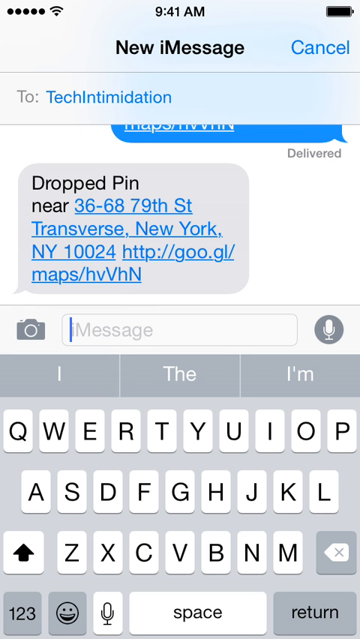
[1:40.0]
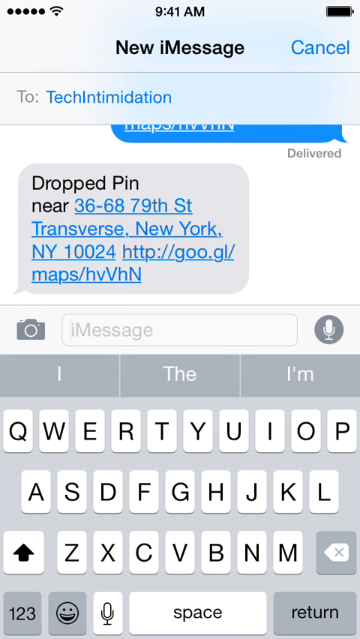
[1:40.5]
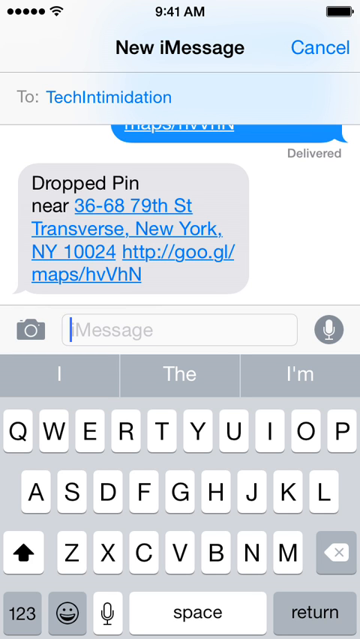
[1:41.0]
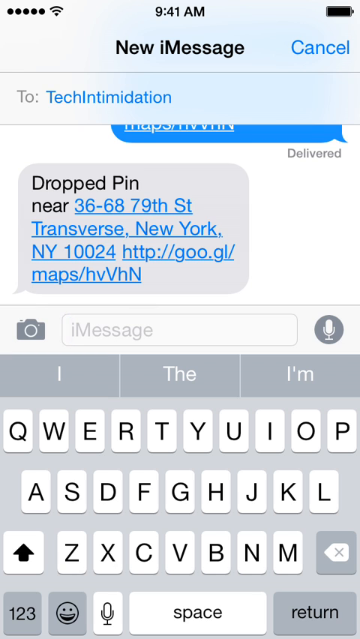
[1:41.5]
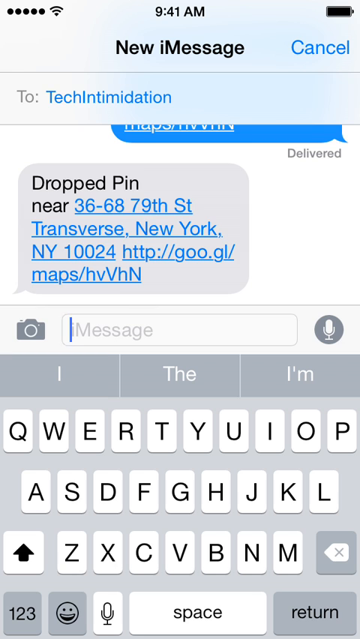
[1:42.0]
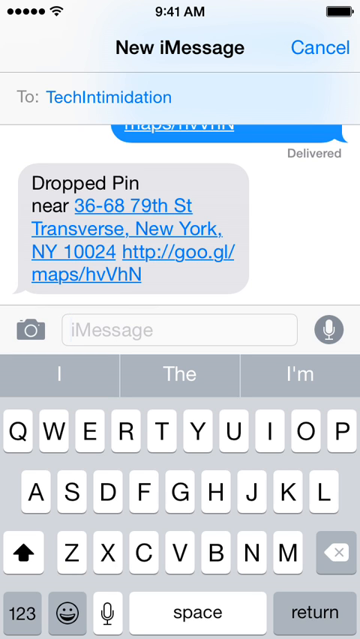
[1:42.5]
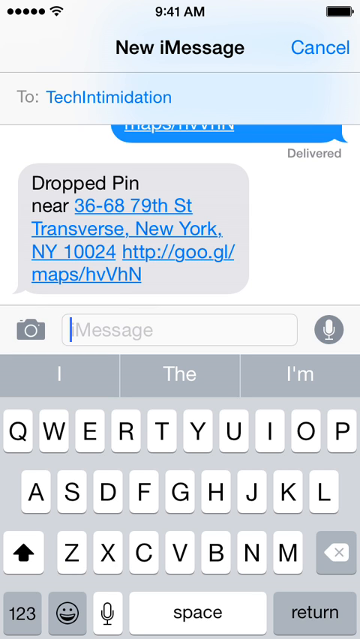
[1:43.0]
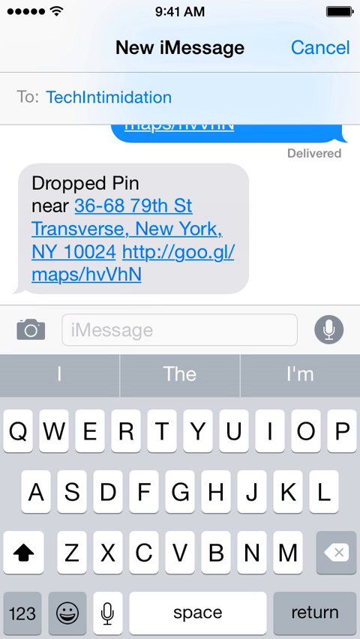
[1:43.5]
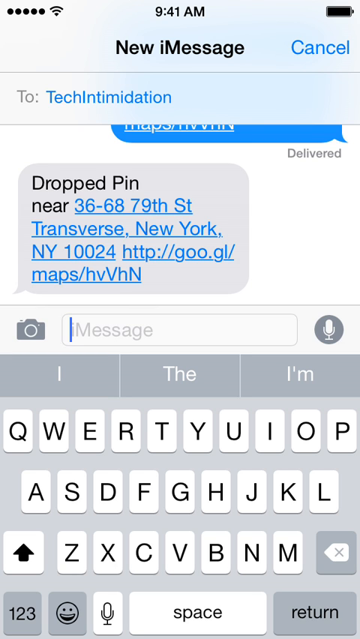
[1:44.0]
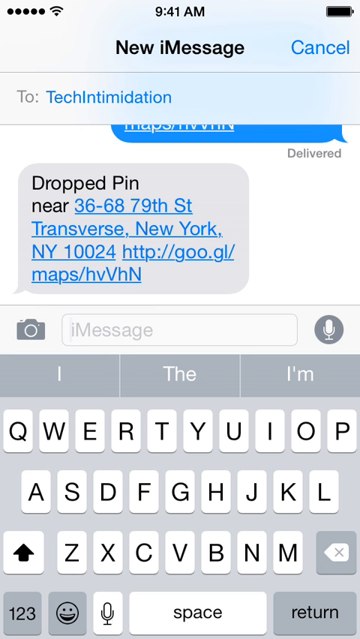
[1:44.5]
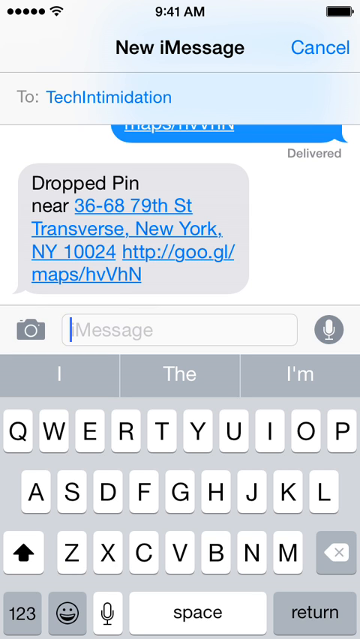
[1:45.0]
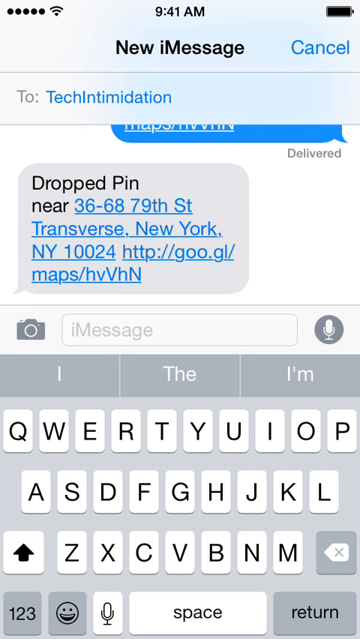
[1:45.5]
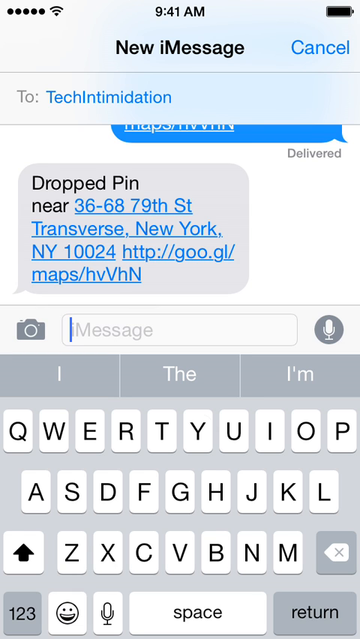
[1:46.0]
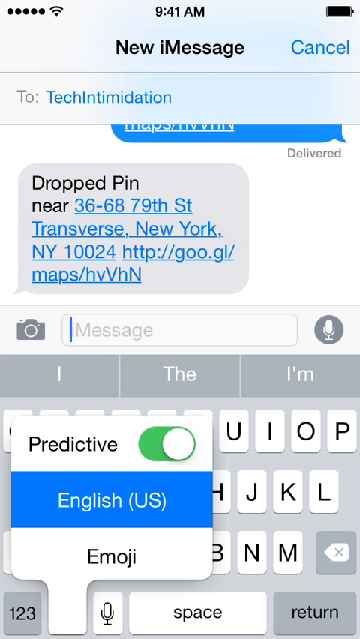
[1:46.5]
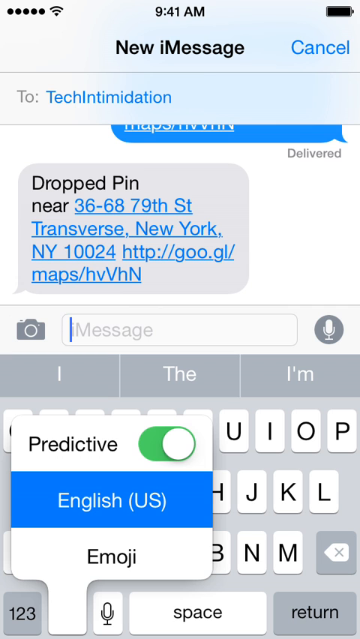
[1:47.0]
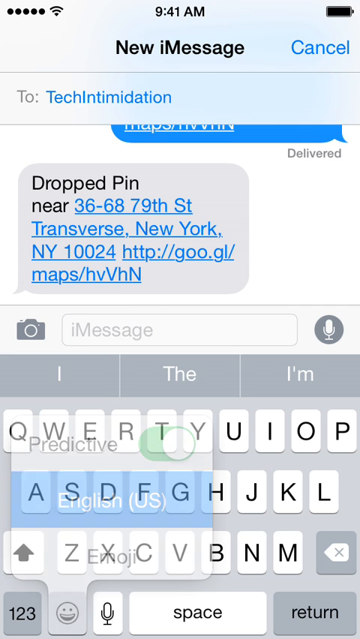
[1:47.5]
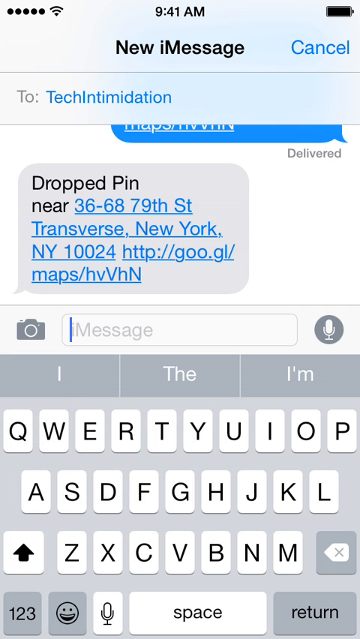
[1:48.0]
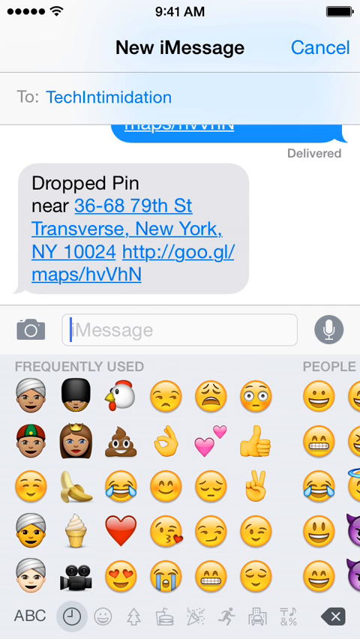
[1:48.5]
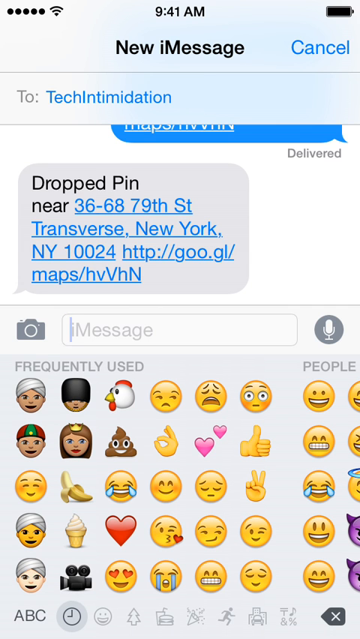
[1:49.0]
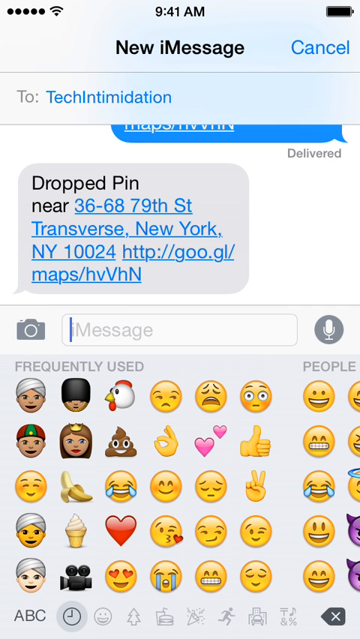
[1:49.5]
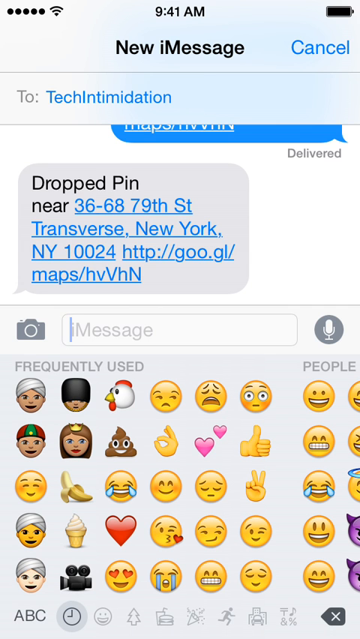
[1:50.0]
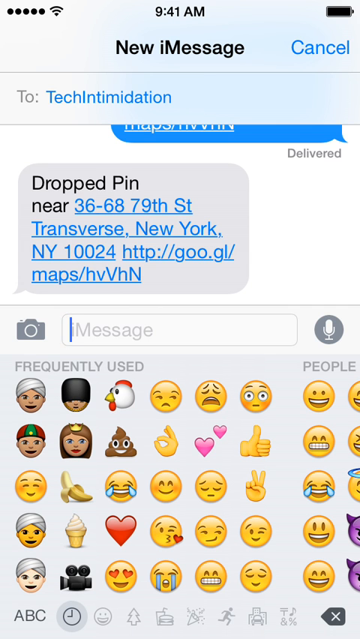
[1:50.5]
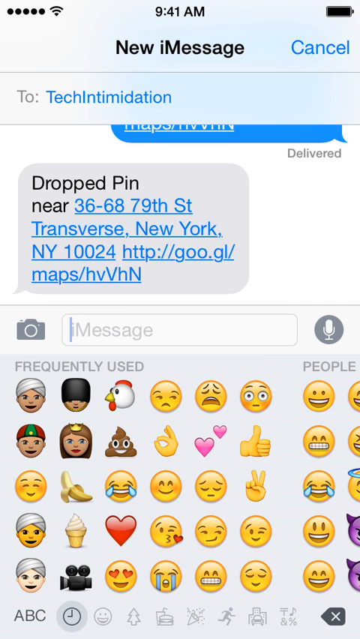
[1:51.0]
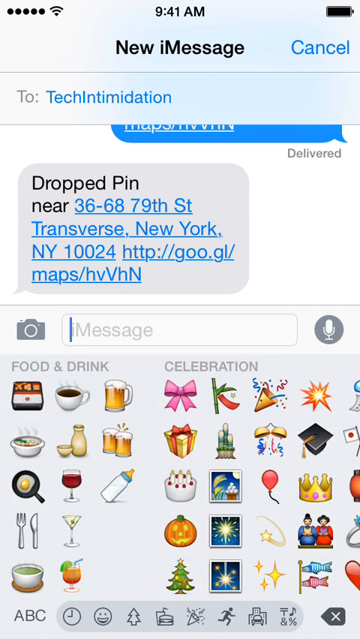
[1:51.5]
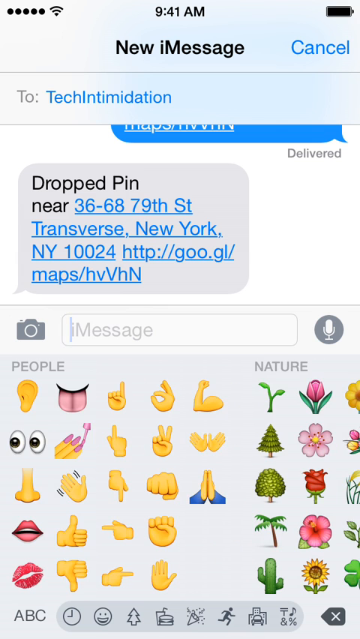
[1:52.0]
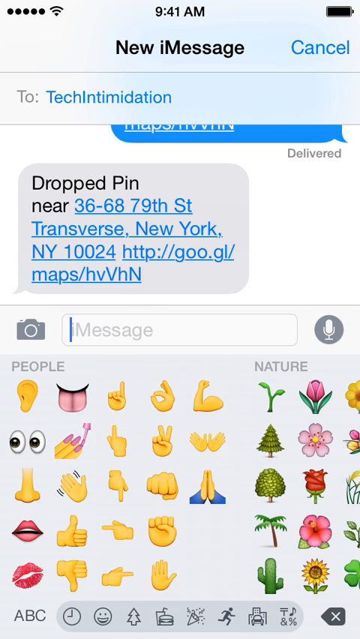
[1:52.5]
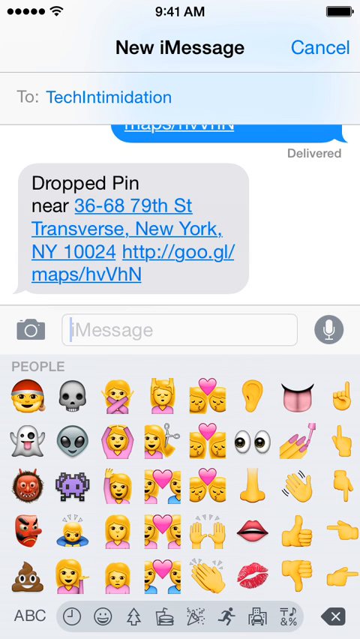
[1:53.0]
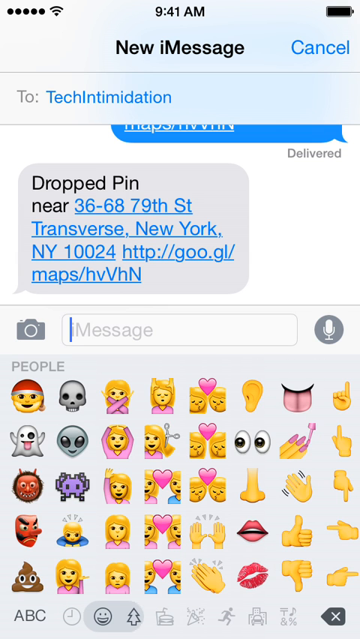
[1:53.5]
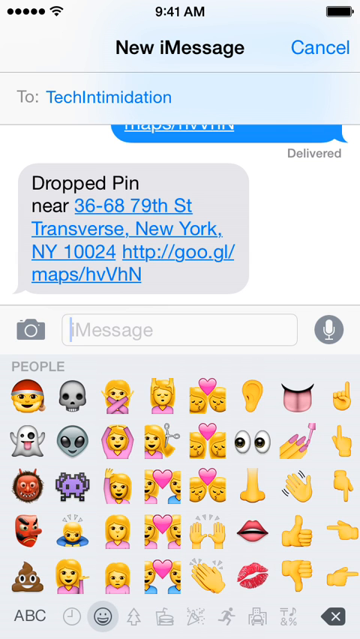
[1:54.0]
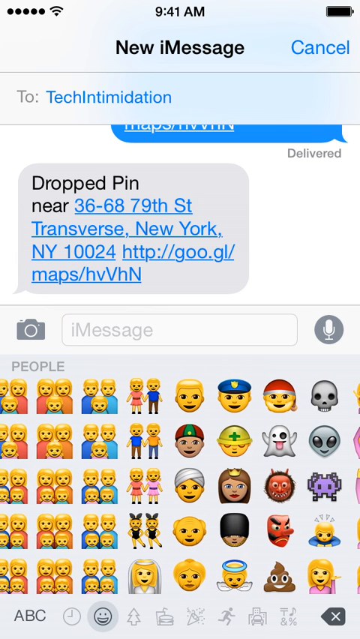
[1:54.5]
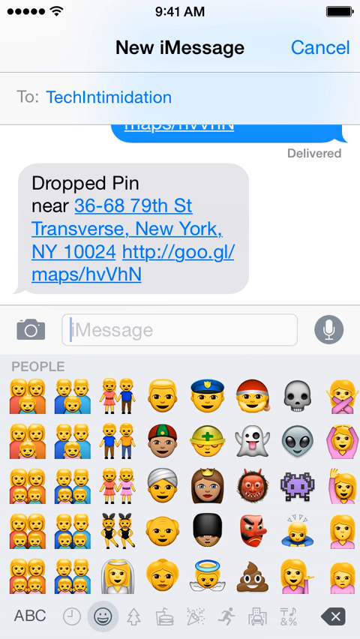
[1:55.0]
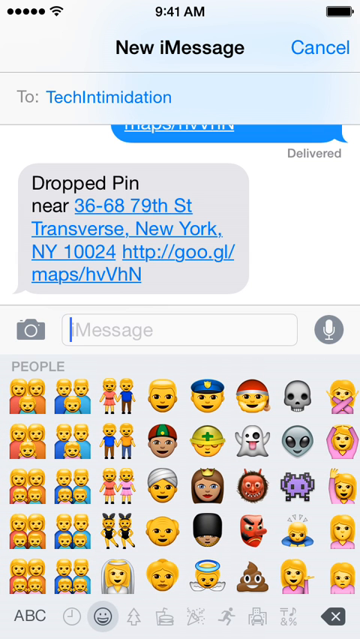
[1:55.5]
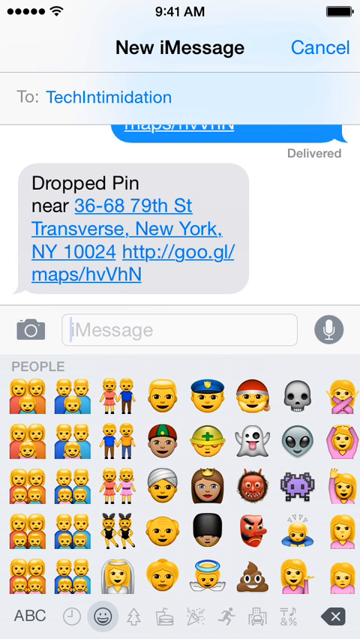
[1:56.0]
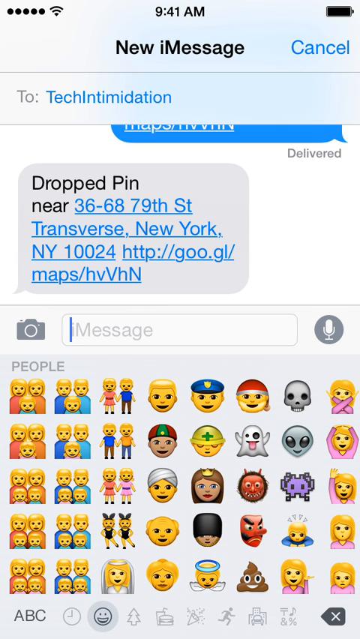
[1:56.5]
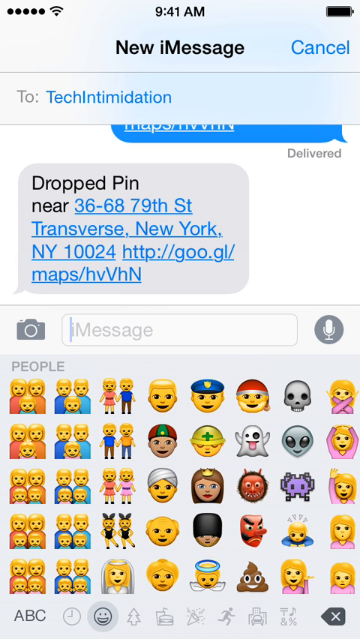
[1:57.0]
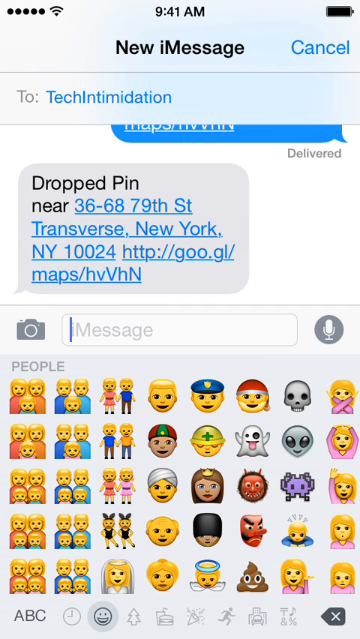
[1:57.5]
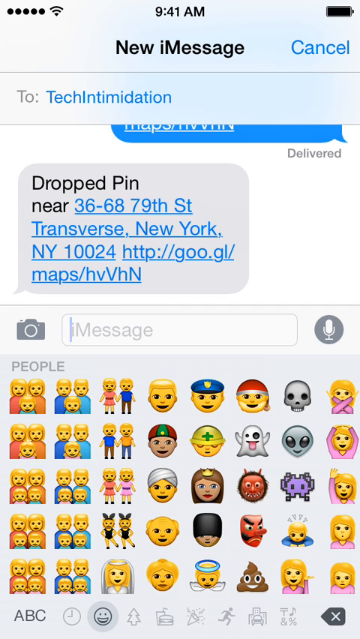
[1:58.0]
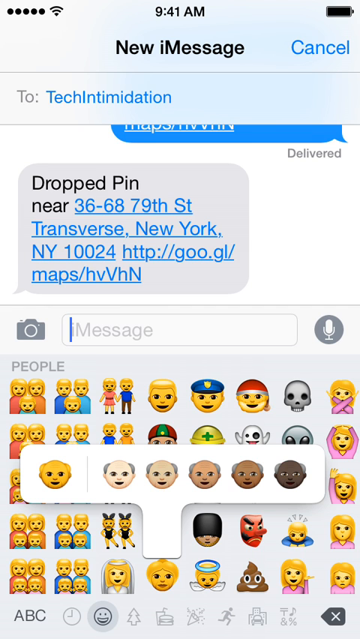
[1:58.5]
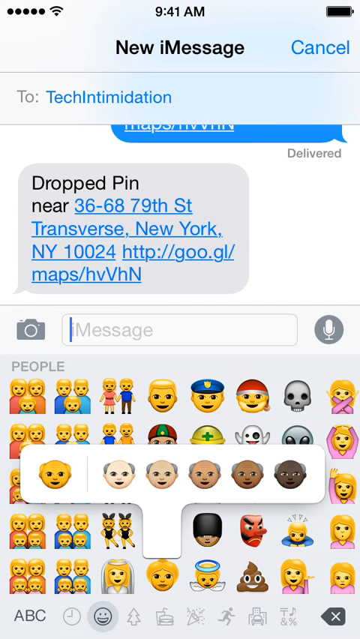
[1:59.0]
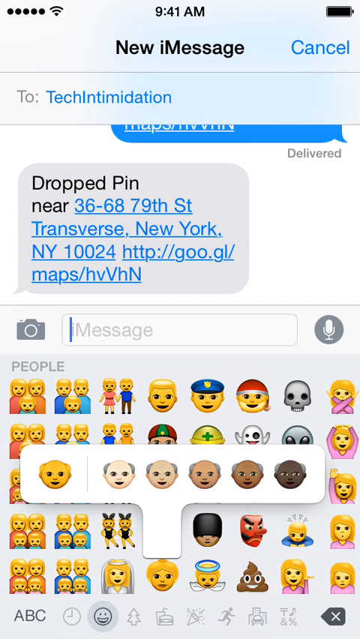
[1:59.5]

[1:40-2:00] Back in messages, nothing happens for a bit. The user then holds the smiley face symbol near the keyboard and switches to the emoji keyboard. They scroll through all the emojis, stopping at the people section, which has families on the left, many jobs in the middle, and ghosts, aliens and a poop symbol on the right. The user selects what appears to be an old man emoji, bringing up different skin colours for it, from an old Caucasian male to an old black male, with three other shades in between from light to dark. Around this old man, there appears to be a female angel on the left and a baby angel on the right, two twins dancing to the top left, and a guy with a black hat to the top right.